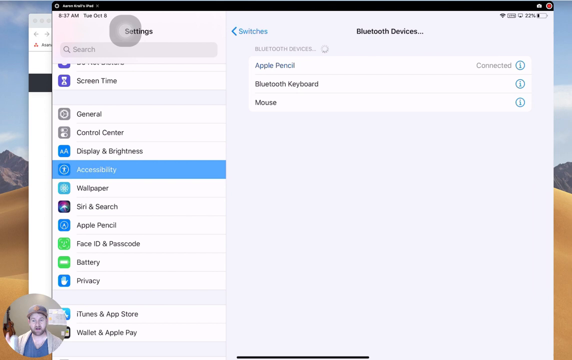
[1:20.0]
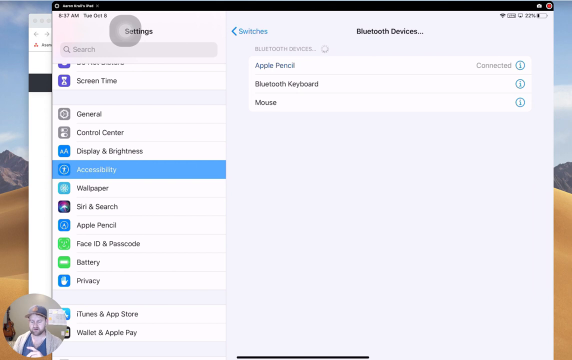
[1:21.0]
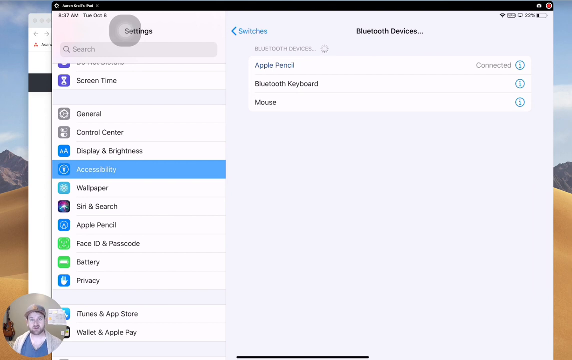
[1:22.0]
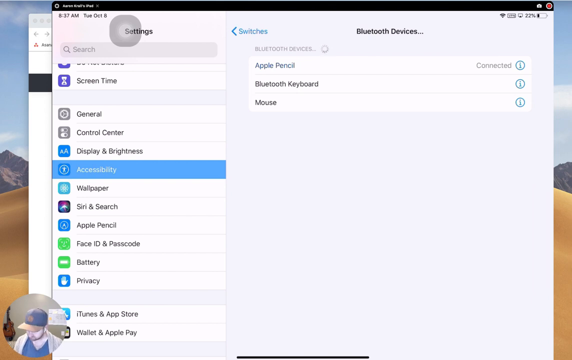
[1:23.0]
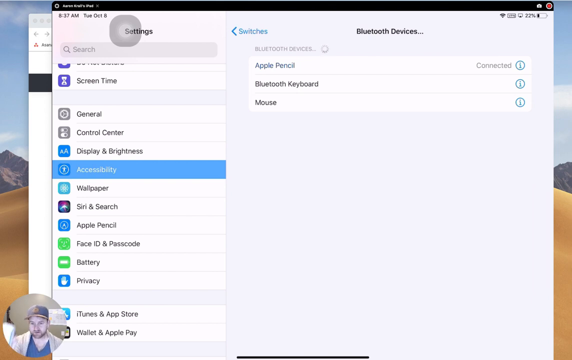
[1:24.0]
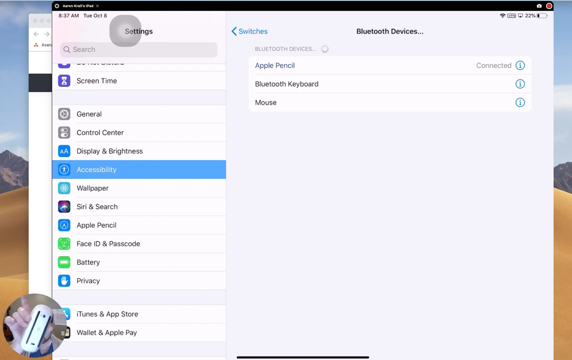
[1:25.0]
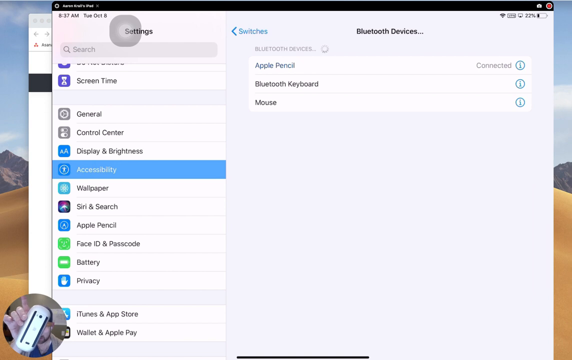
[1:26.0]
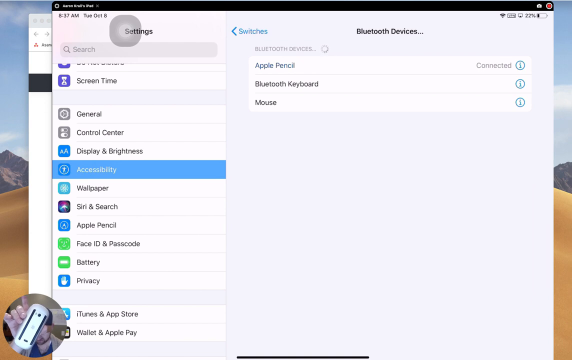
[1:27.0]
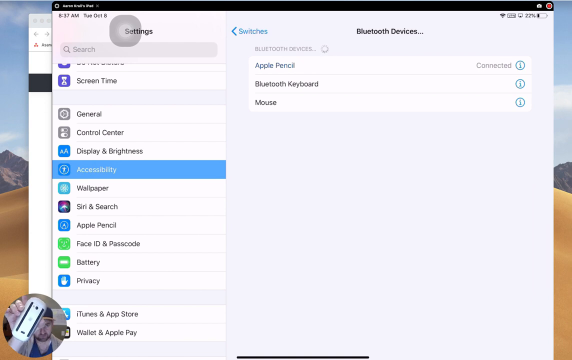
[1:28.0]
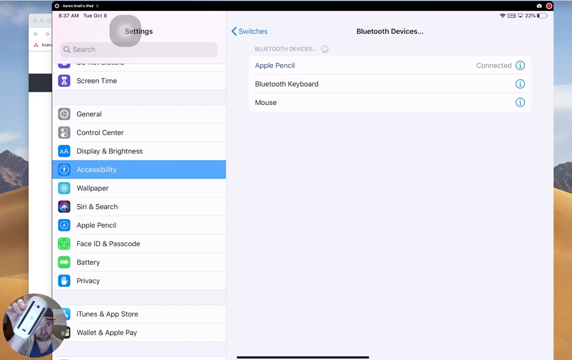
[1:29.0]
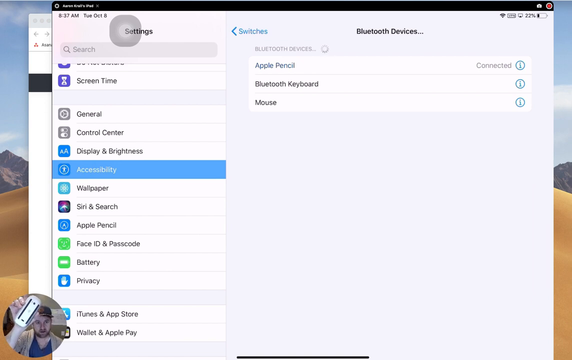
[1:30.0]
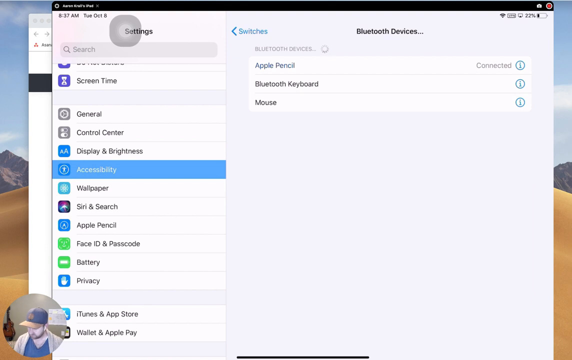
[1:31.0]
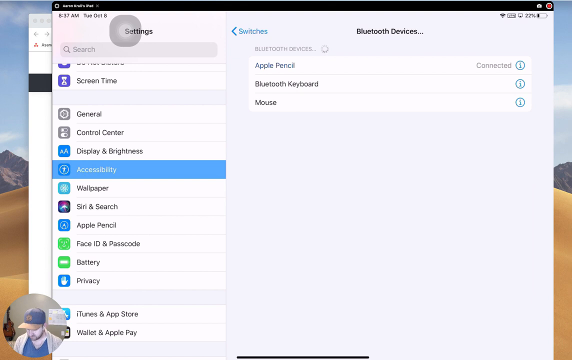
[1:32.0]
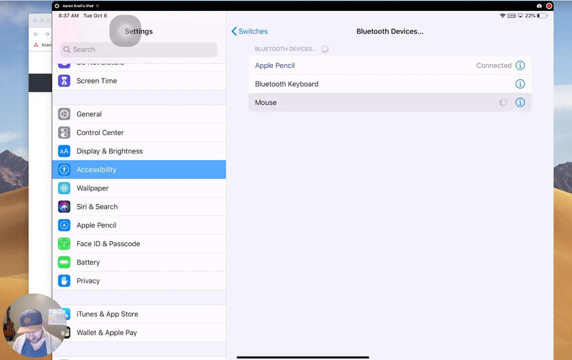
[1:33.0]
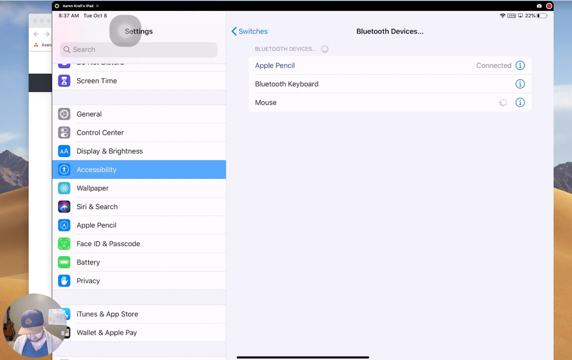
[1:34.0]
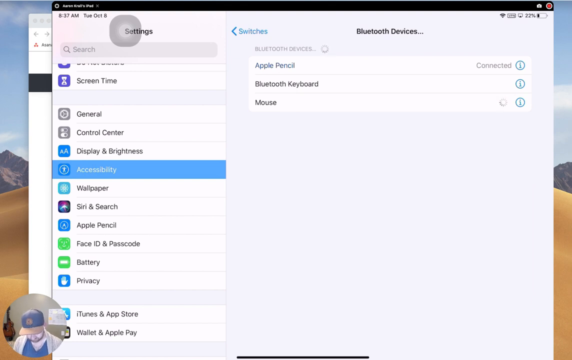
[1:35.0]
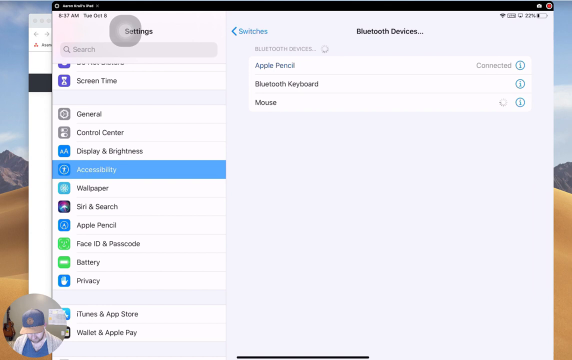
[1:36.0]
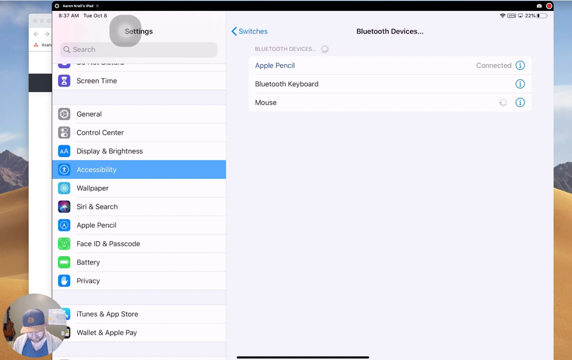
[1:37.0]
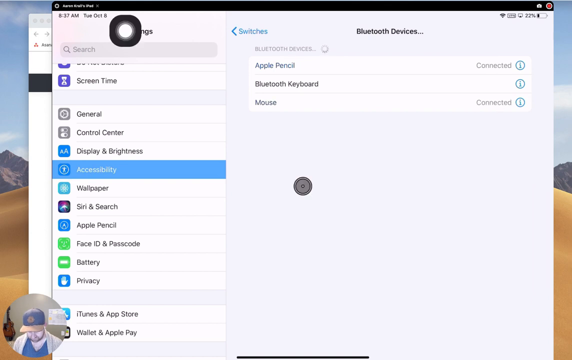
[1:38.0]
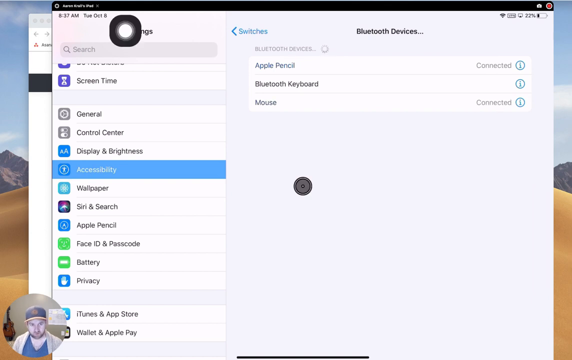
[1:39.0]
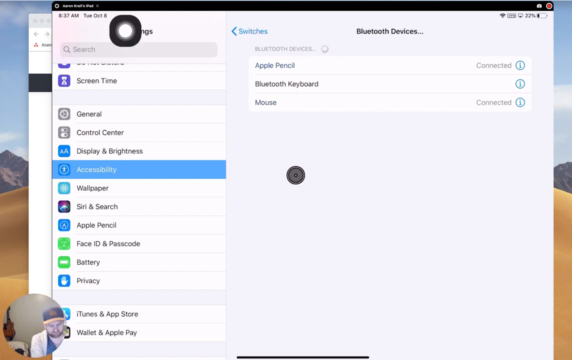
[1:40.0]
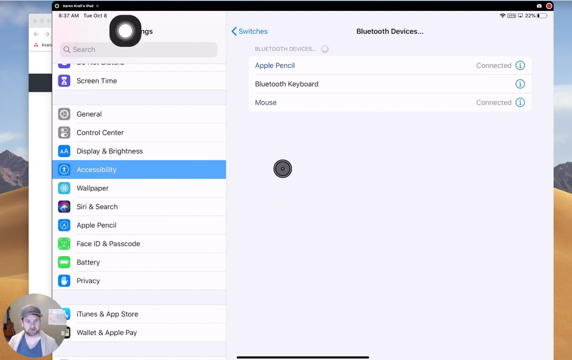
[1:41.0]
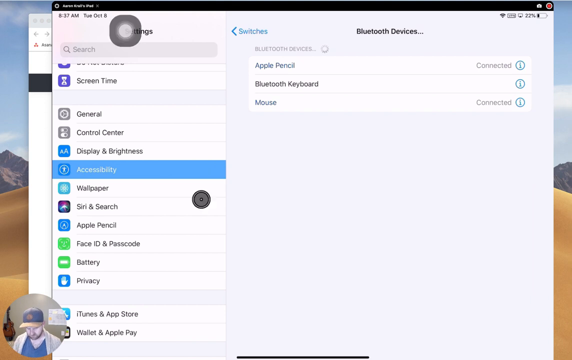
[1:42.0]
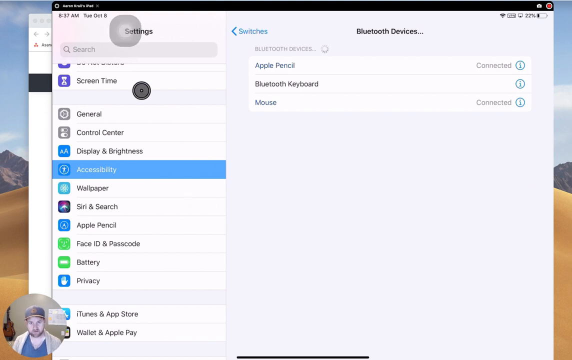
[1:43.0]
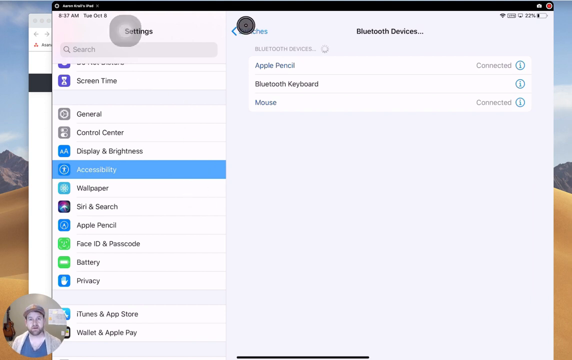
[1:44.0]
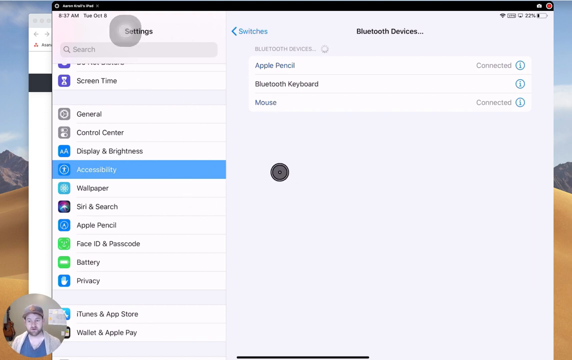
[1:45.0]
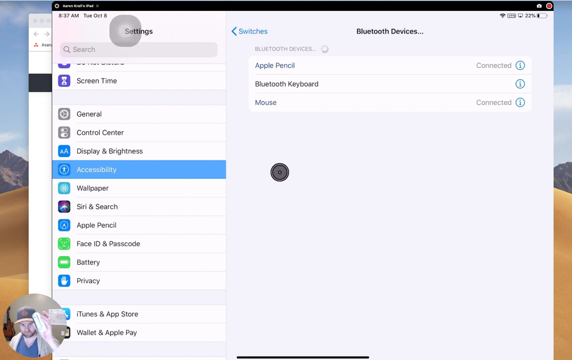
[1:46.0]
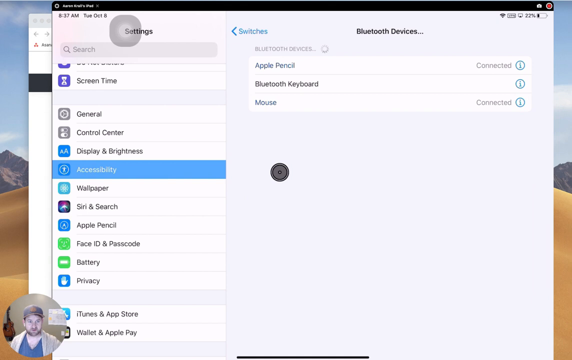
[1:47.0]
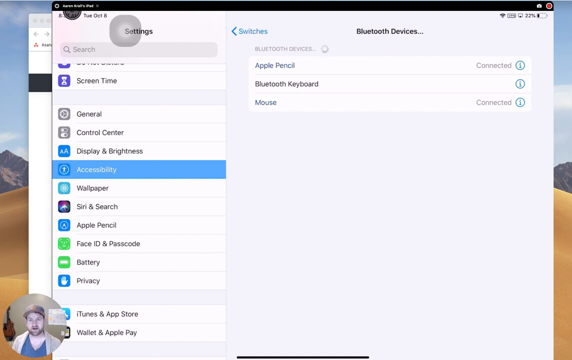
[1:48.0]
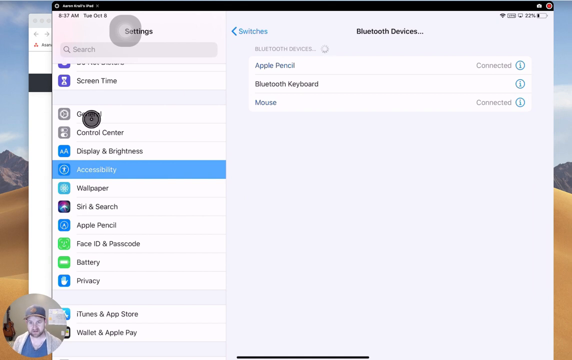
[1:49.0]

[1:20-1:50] An accessibility option is shown, followed by the Bluetooth device section, which lists several connected Bluetooth devices: an Apple Pencil, USB-C, an iPad and a mouse option. The mouse pointer hovers over different parts of the screen as he goes through the tutorial on the screen-shared desktop.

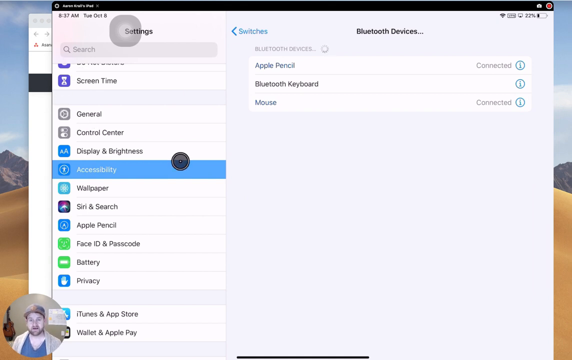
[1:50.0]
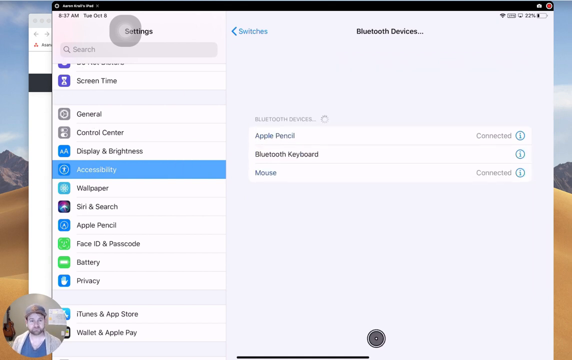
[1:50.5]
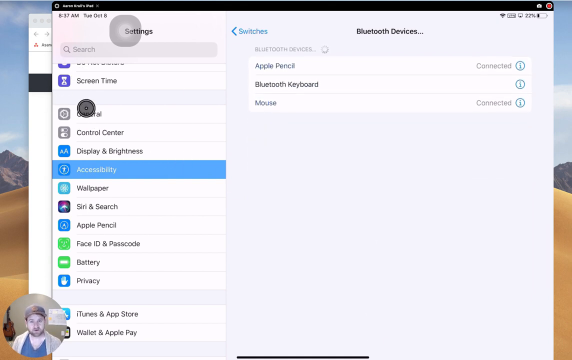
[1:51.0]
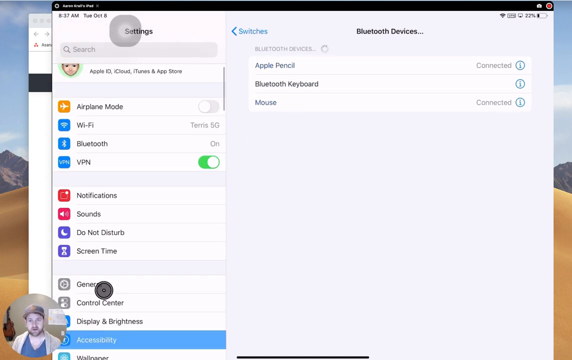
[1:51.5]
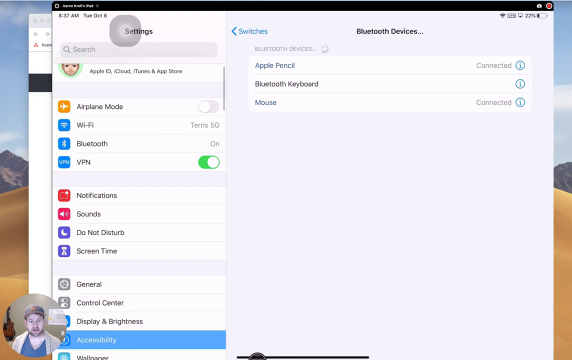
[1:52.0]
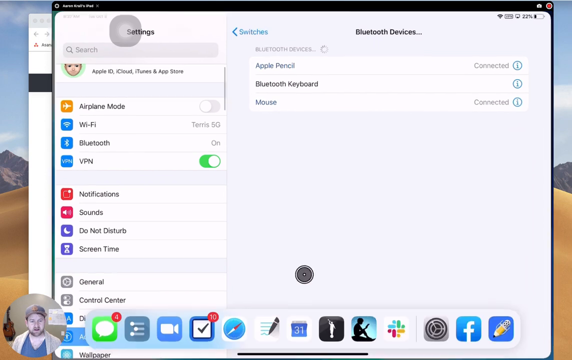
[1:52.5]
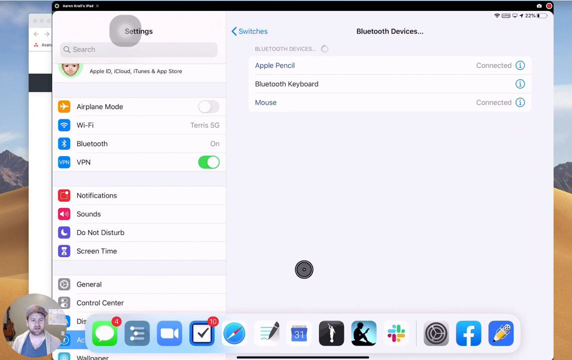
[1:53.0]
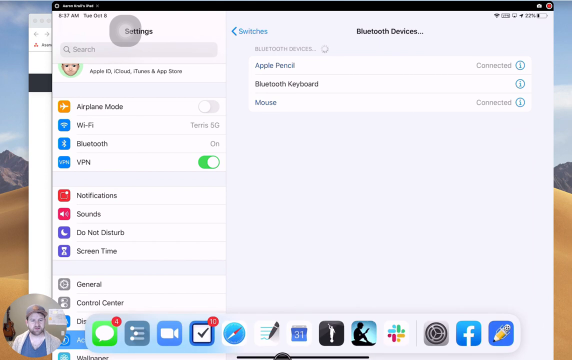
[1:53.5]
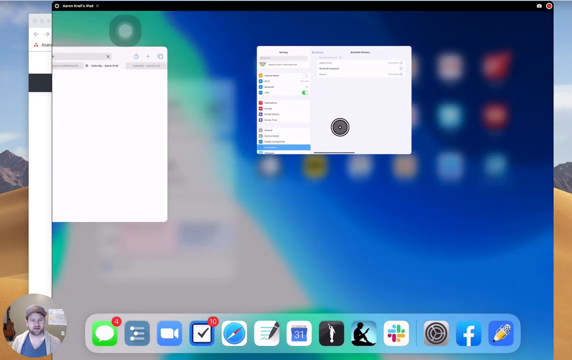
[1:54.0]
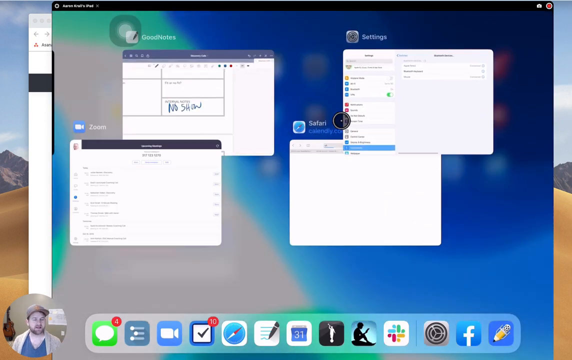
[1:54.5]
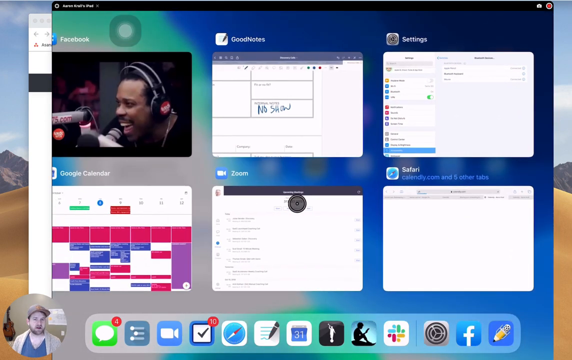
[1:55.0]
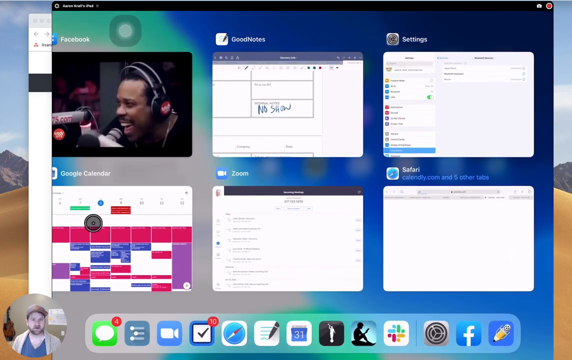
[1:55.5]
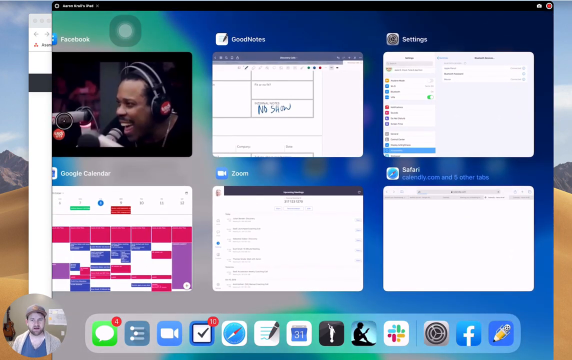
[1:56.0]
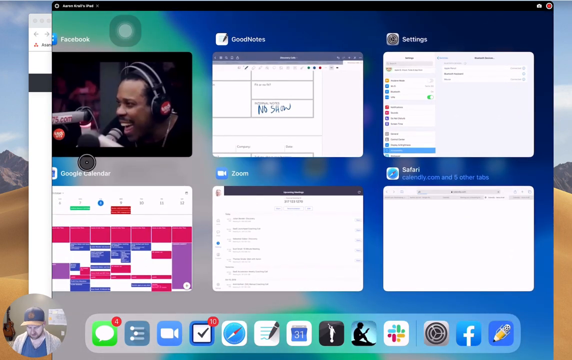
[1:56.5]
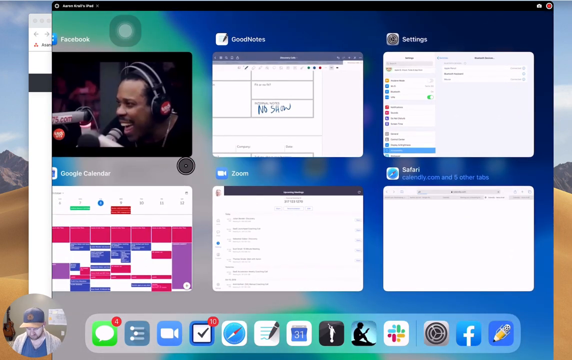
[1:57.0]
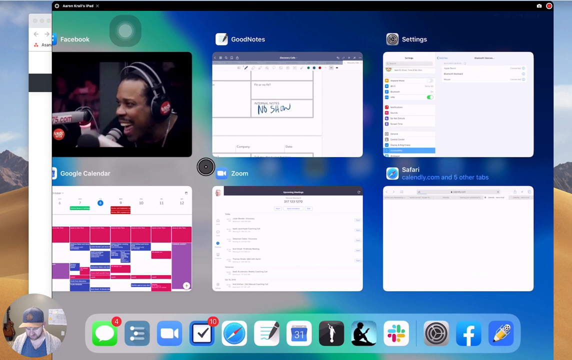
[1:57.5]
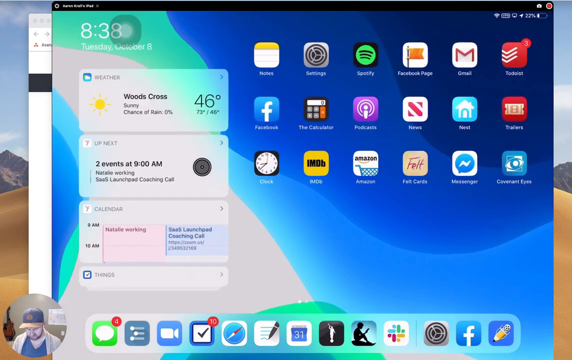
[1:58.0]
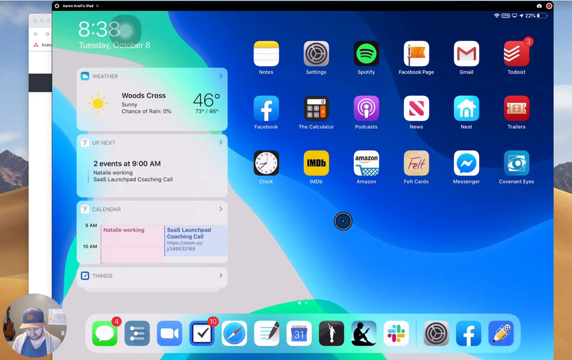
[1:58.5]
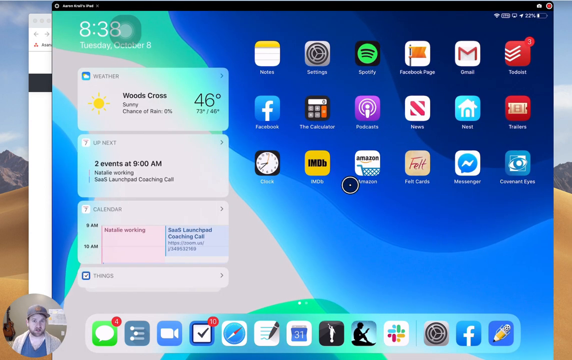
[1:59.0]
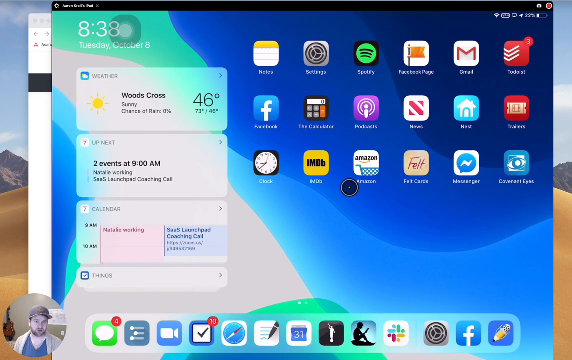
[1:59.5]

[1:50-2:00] The man opens several windows at the same time, and the view scrolls through different options on the desktop. In the bottom left corner of the screen, his face is shown in a small bubble. He moves through the apps to the accessibility section of the settings, with Bluetooth devices highlighted; the section lists an Apple Pencil, a Bluetooth keyboard and the mouse, and shows that some of these devices are connected to the computer.